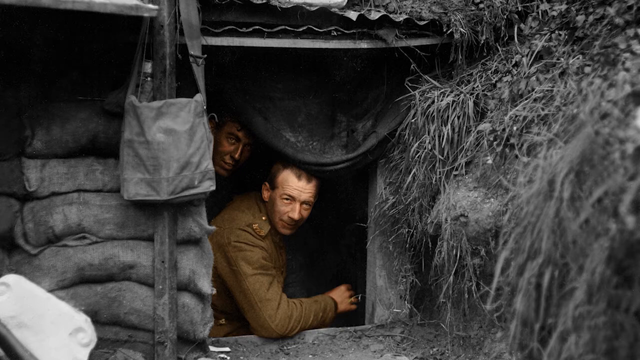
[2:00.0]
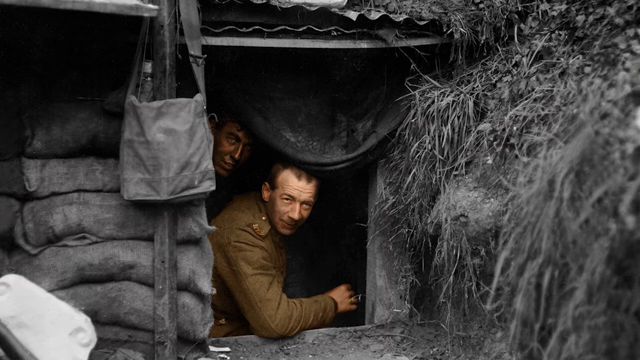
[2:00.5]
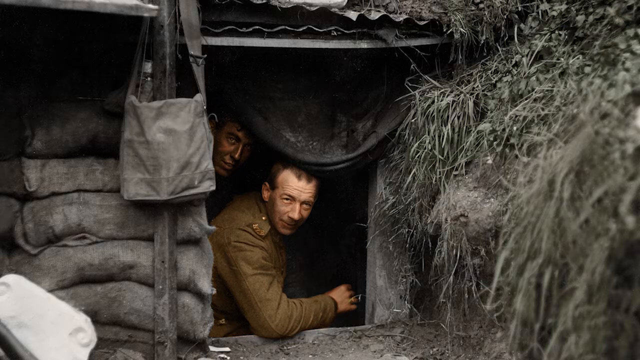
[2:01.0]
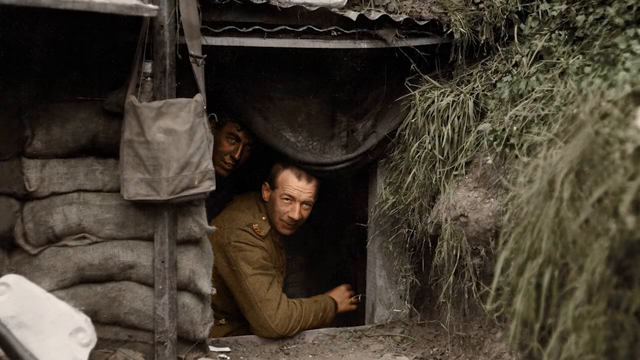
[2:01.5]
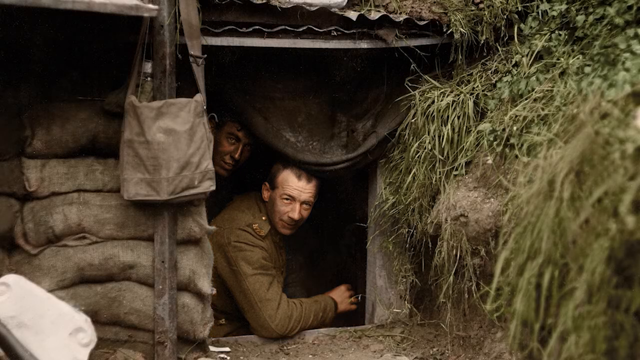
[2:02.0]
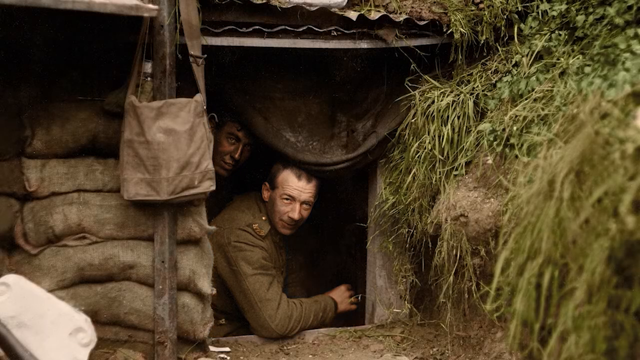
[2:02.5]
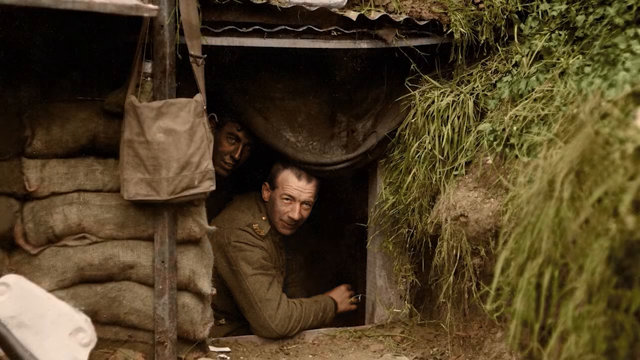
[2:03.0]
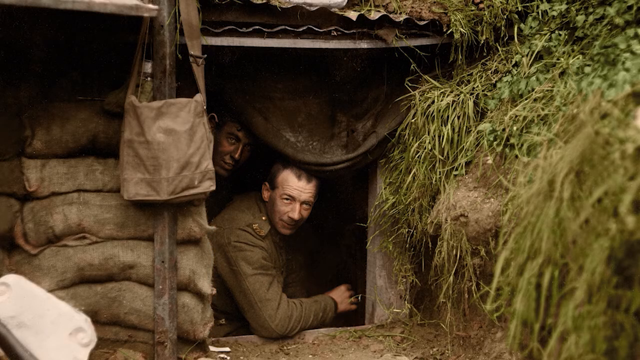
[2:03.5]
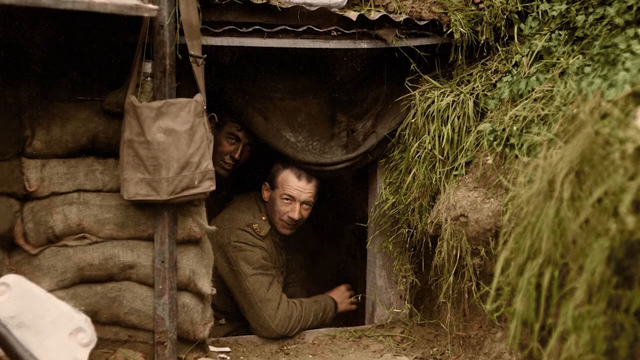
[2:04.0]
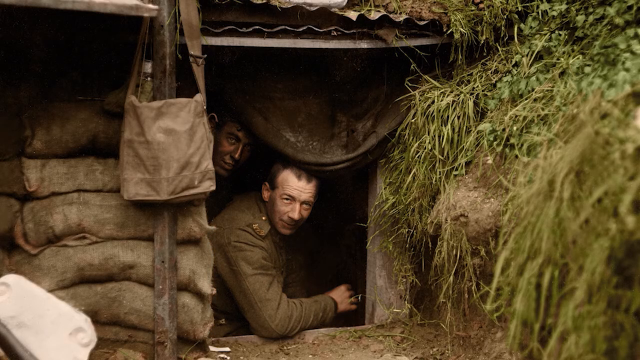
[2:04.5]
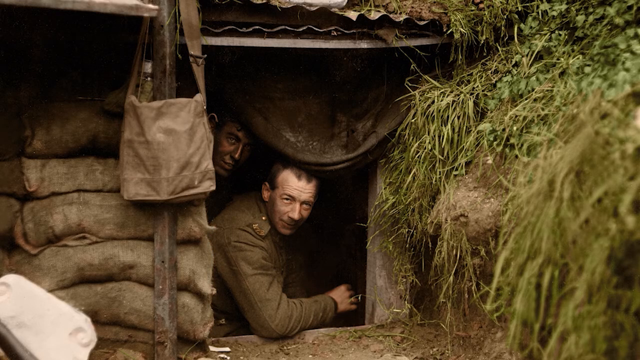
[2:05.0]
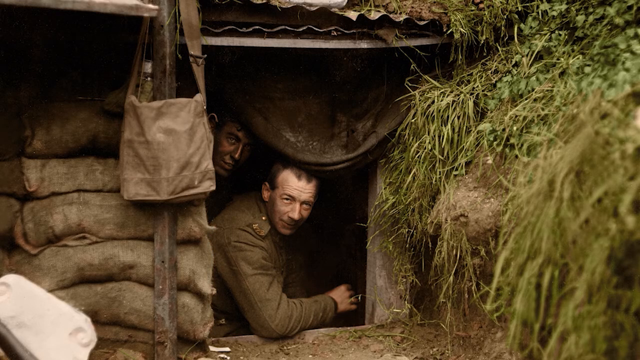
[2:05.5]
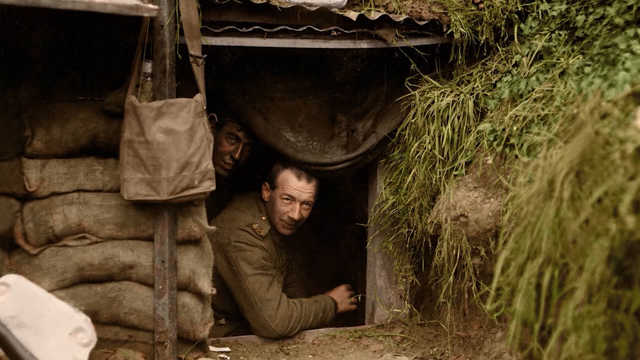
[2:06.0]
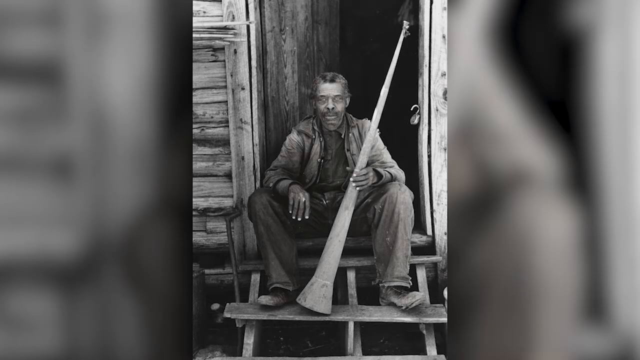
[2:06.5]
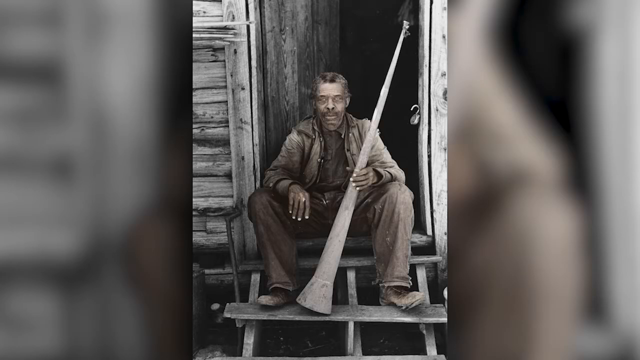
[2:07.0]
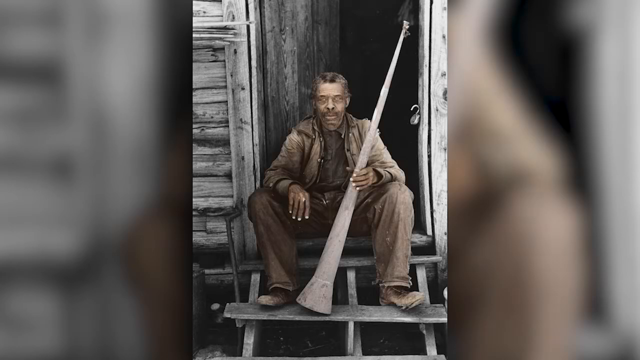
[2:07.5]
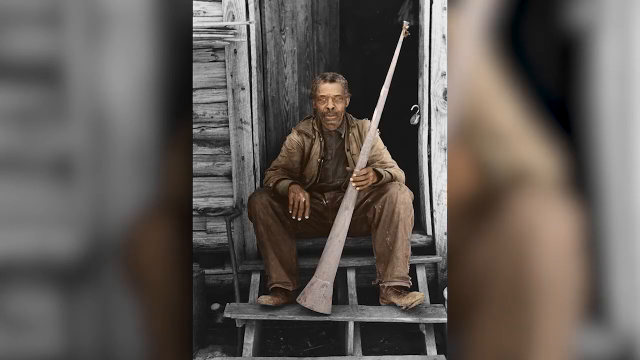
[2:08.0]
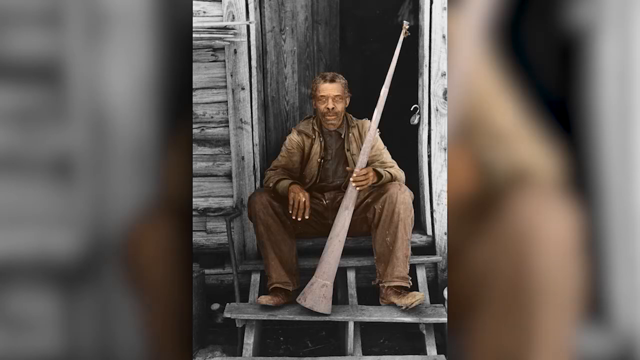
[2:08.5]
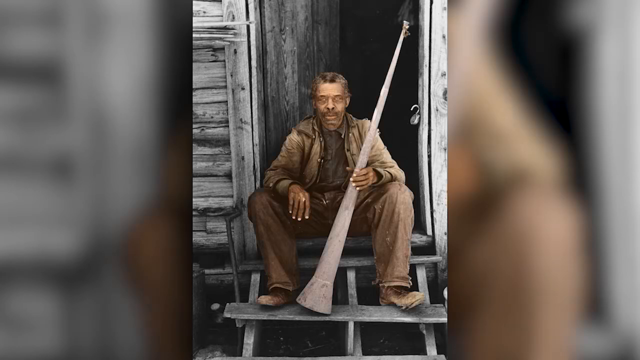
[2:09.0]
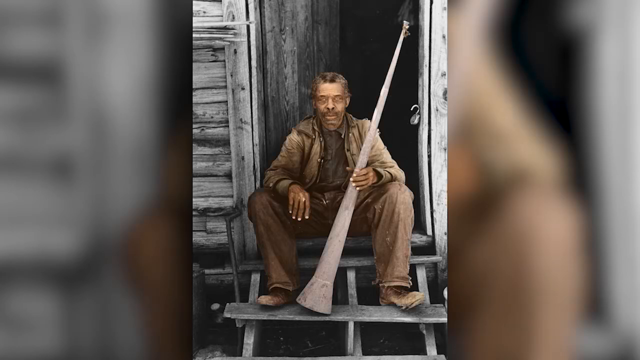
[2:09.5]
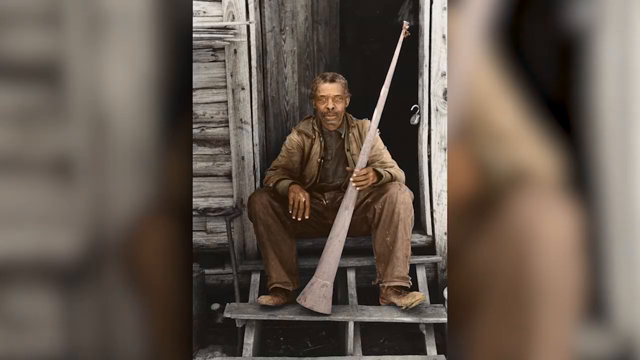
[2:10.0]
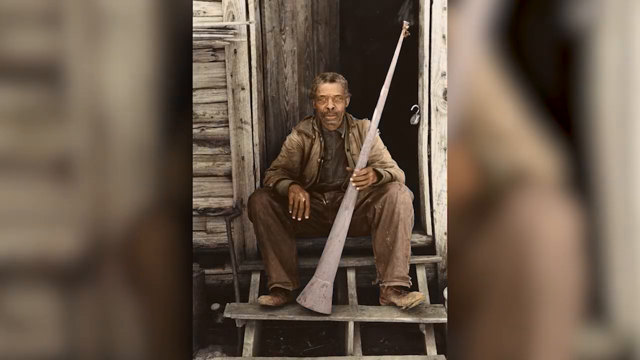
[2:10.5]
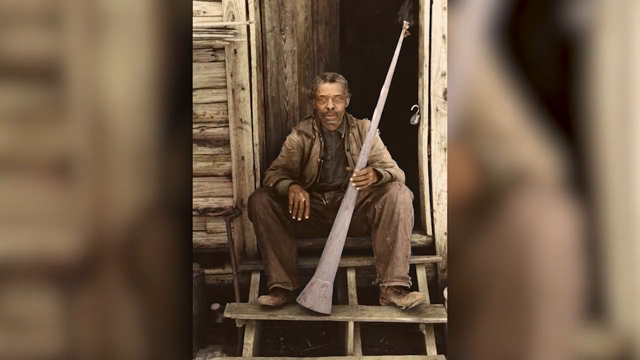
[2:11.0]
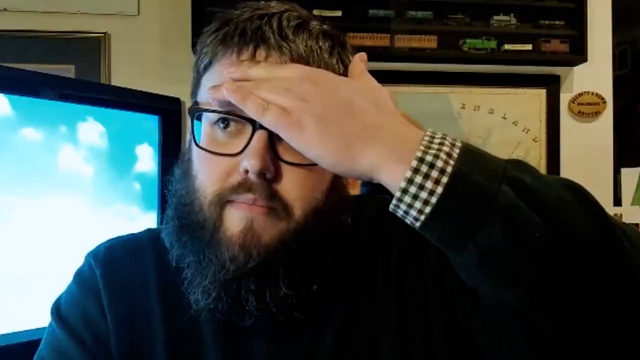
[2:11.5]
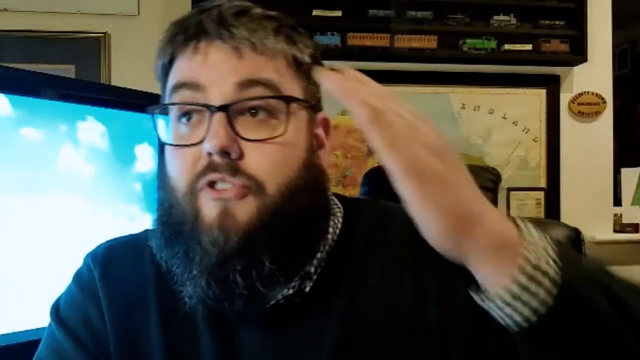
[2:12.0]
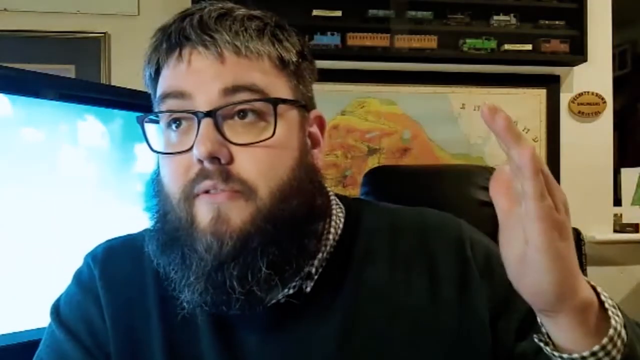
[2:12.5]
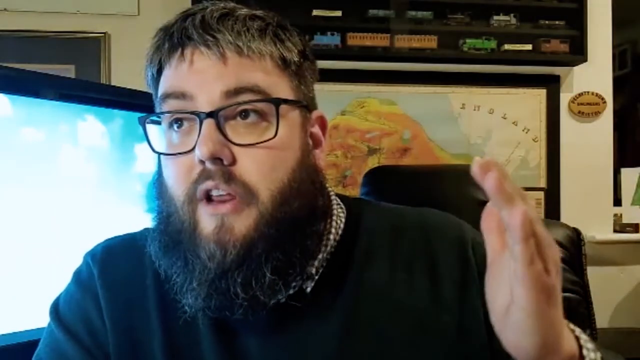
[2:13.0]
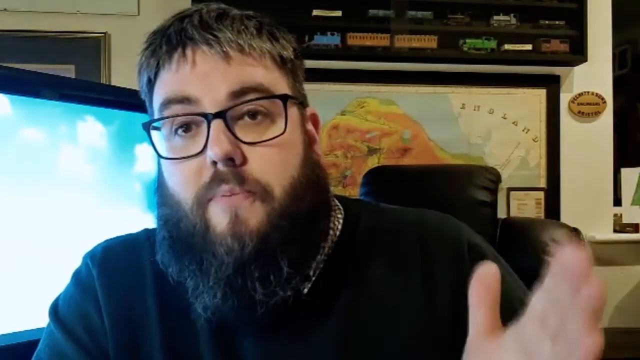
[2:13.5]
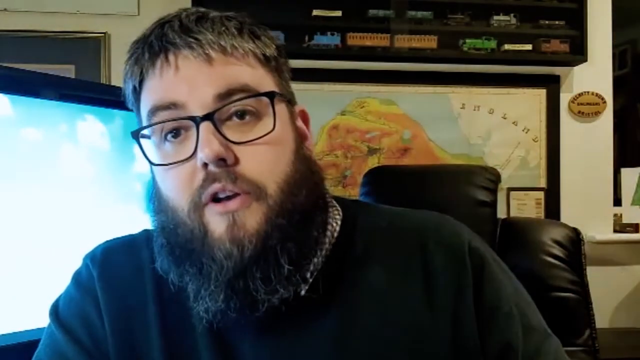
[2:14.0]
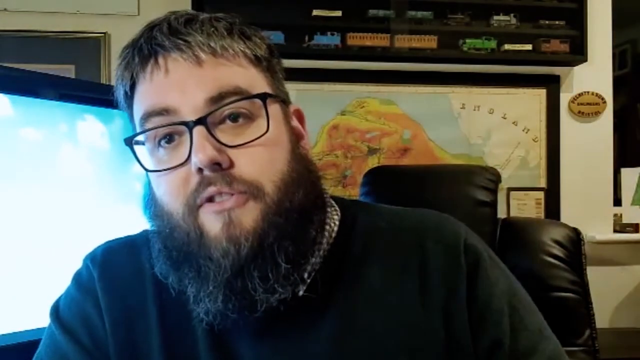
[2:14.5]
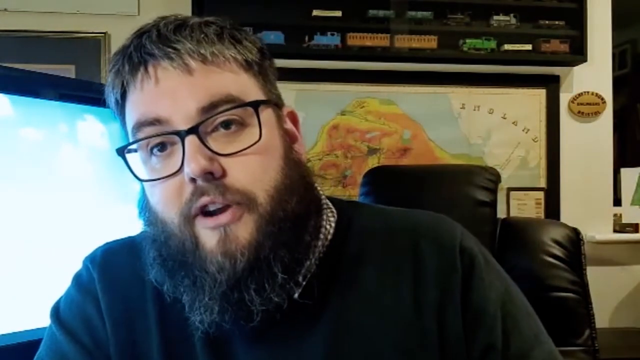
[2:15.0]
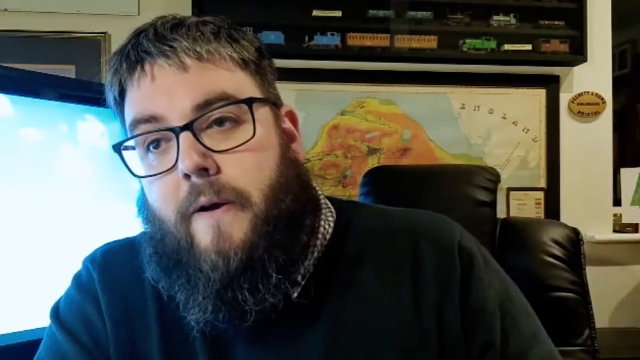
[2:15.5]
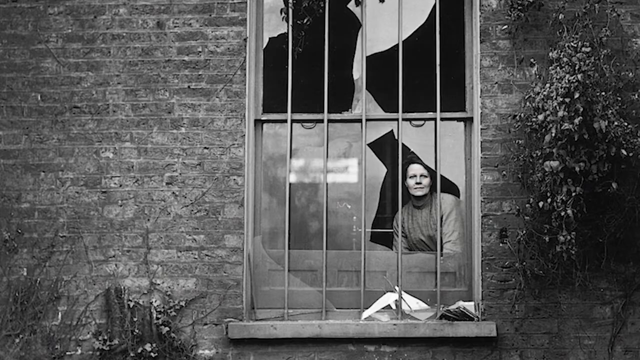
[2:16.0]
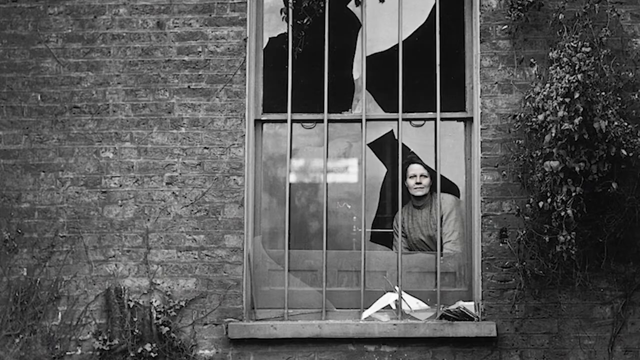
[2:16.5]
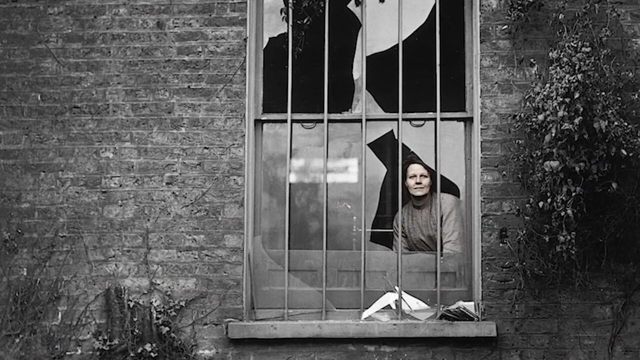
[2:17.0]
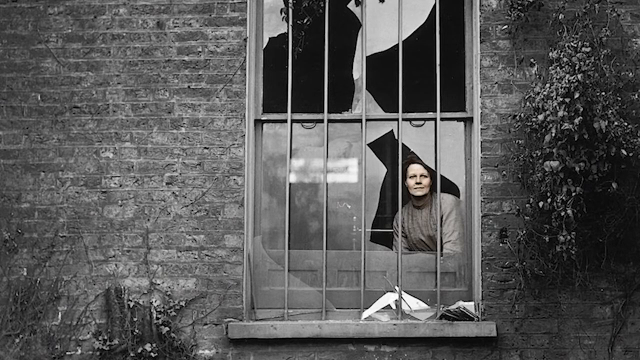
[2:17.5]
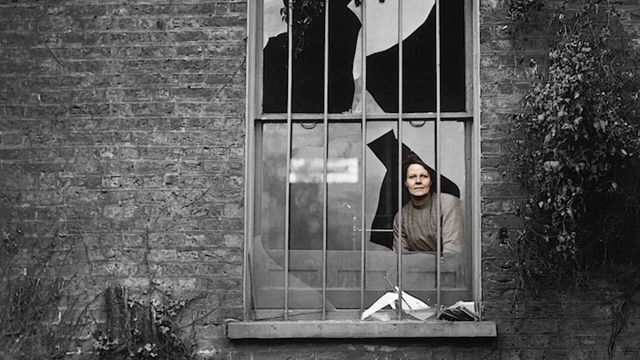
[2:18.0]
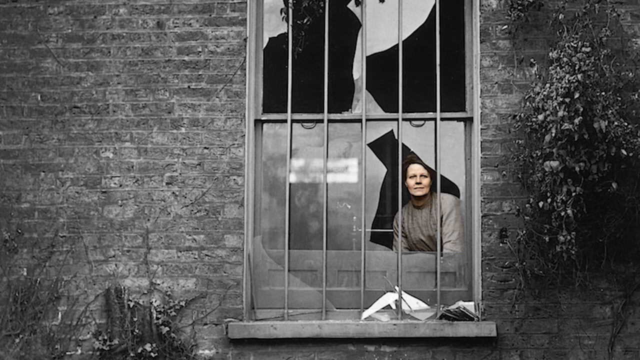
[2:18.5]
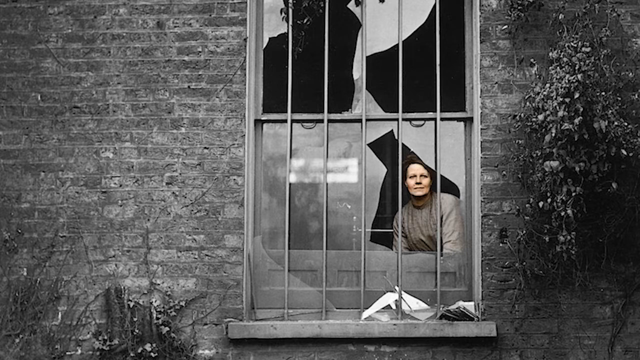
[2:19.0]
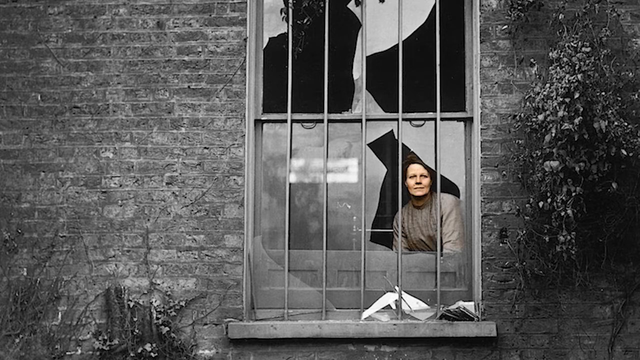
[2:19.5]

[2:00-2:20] In the cave or makeshift building, two men who look like soldiers are in color, and then the rest of the image comes into color, with grass on the right side and a bag hanging. Next is what could be a Black man, possibly a slave, holding some type of horn or weapon and sitting on the porch of a wooden shack-looking place. The video returns to the man with the beard and glasses speaking to the camera, with the screen and little miniature trains on a shelf. As he talks, a black-and-white photo shows a woman staring through bars and a broken glass window of a brick building. She turns to color. A person who could have been a slave, possibly Black, is shown. These pictures fade from black and white to color.